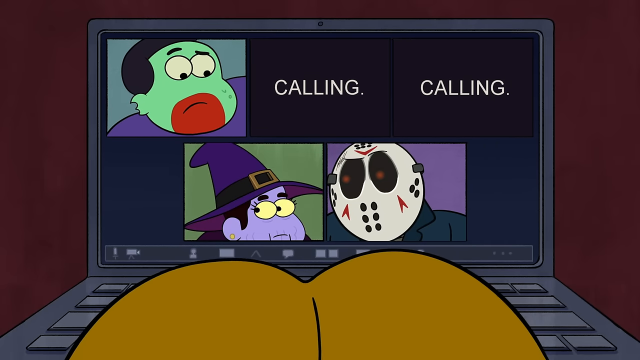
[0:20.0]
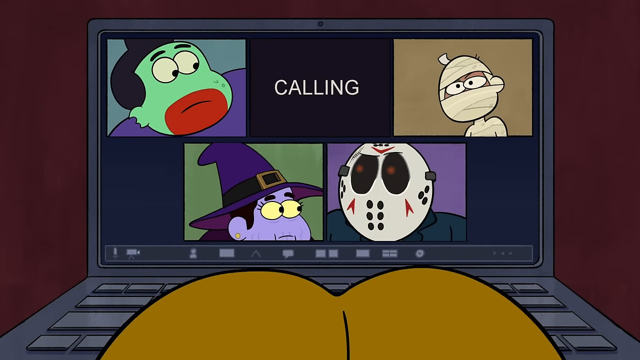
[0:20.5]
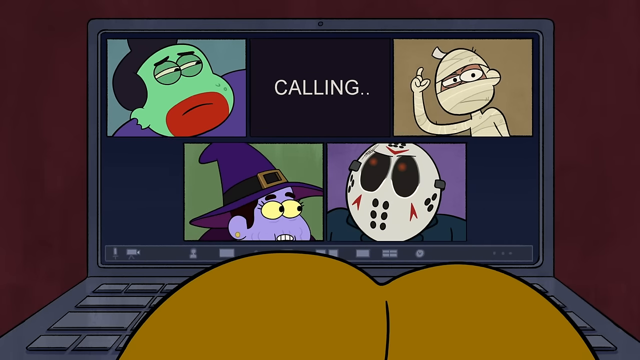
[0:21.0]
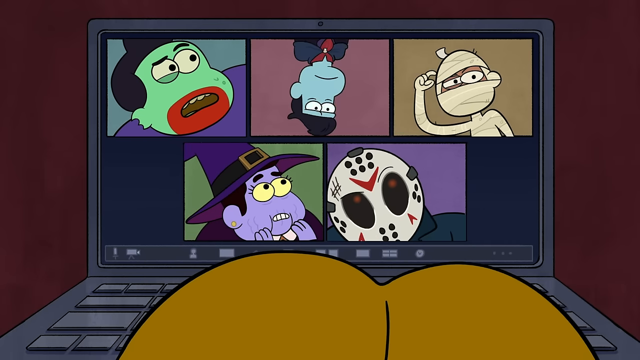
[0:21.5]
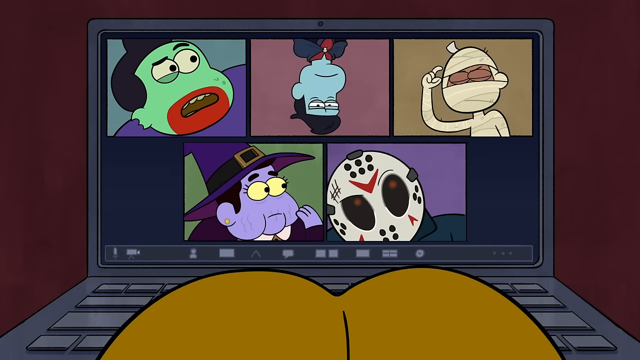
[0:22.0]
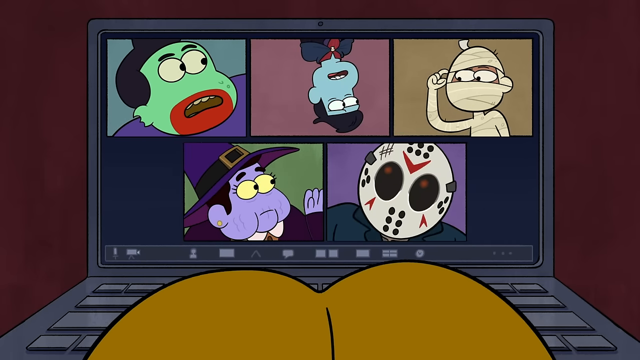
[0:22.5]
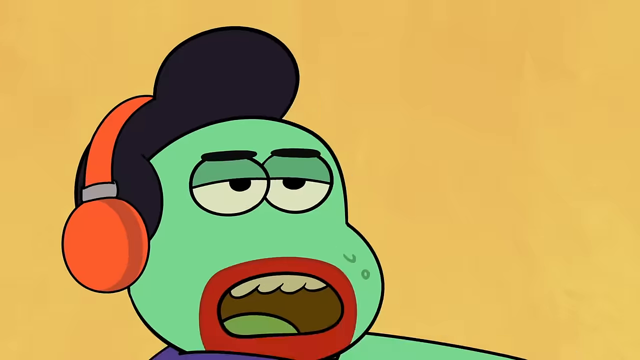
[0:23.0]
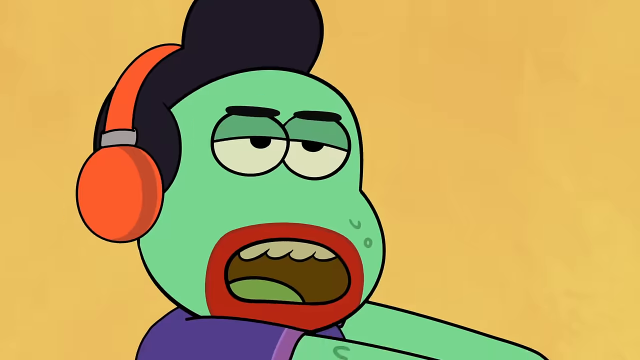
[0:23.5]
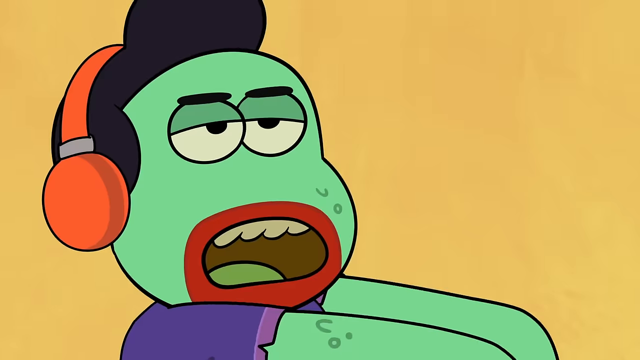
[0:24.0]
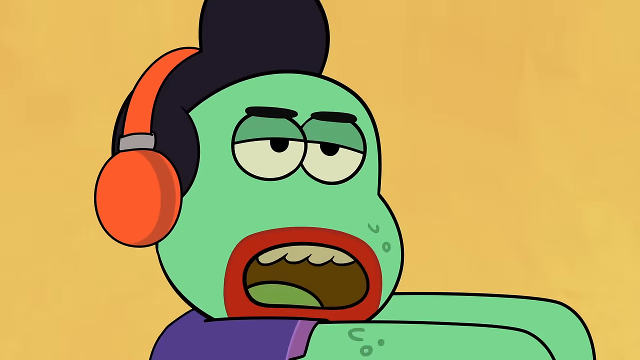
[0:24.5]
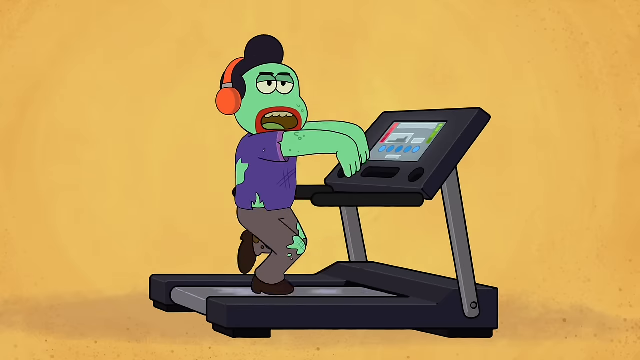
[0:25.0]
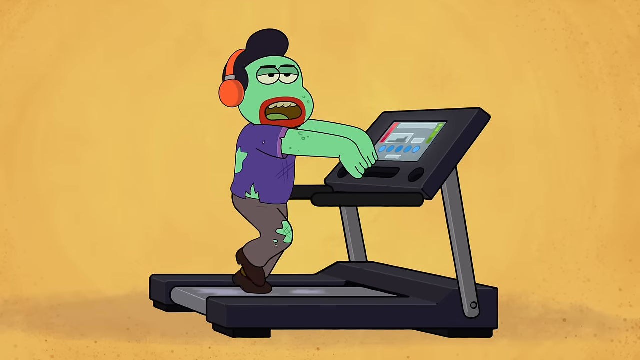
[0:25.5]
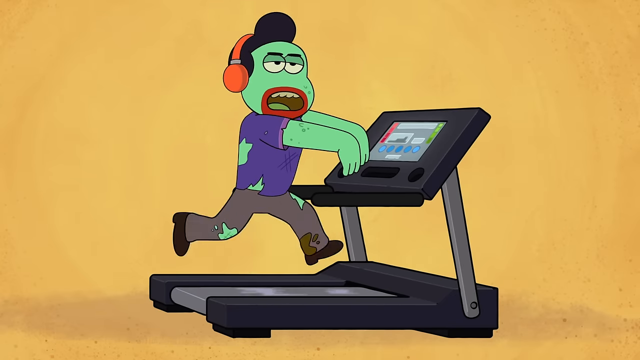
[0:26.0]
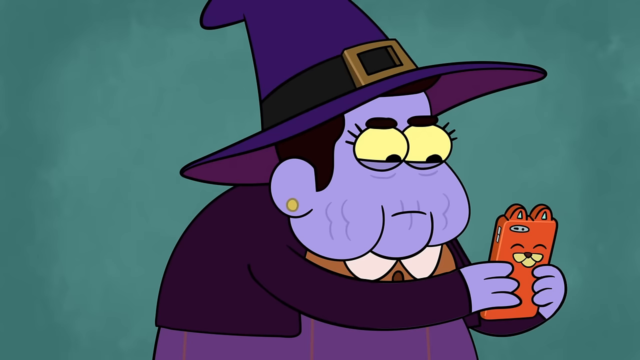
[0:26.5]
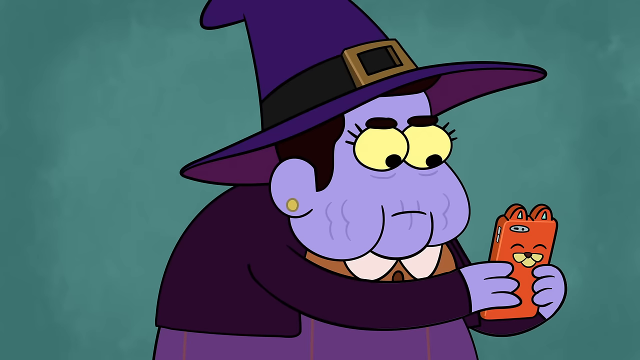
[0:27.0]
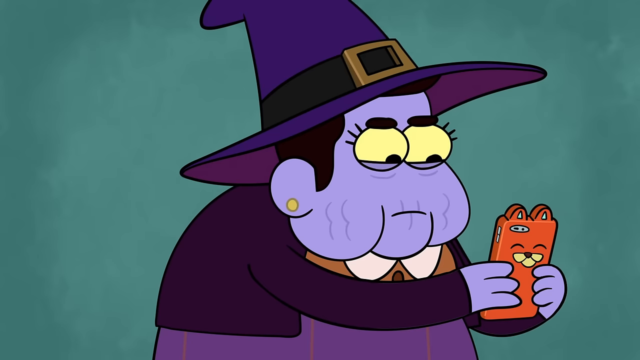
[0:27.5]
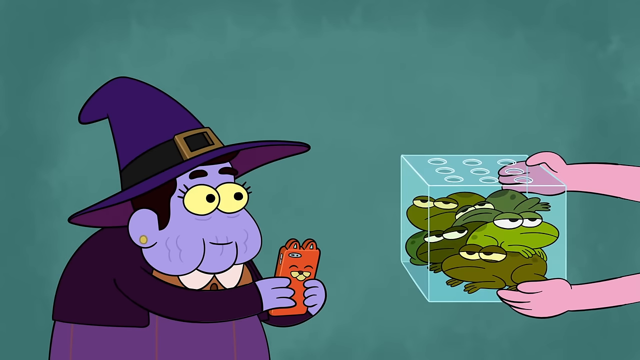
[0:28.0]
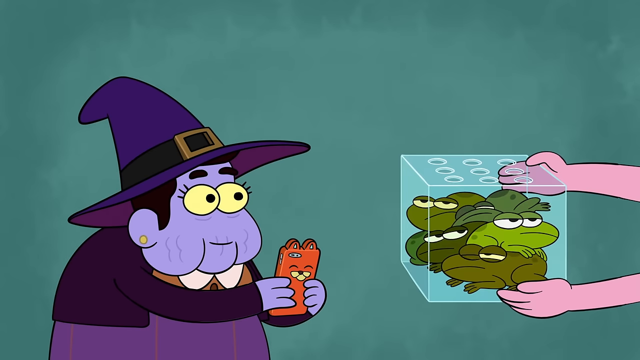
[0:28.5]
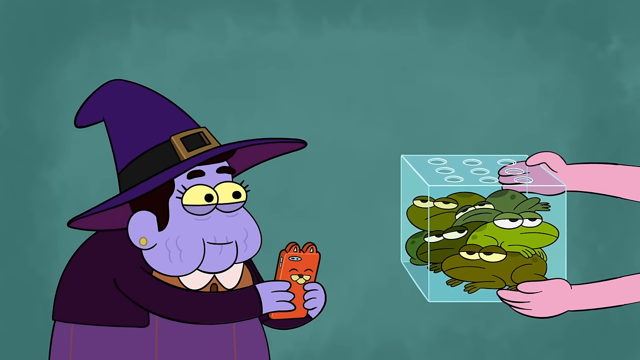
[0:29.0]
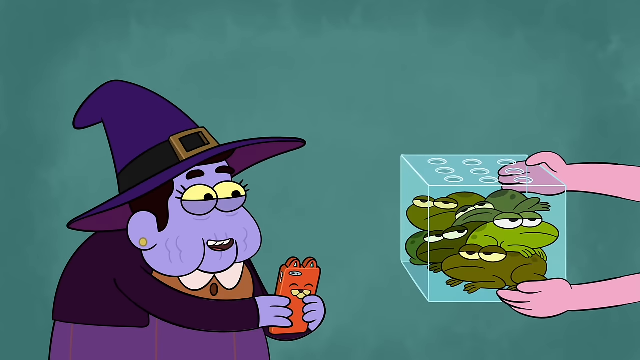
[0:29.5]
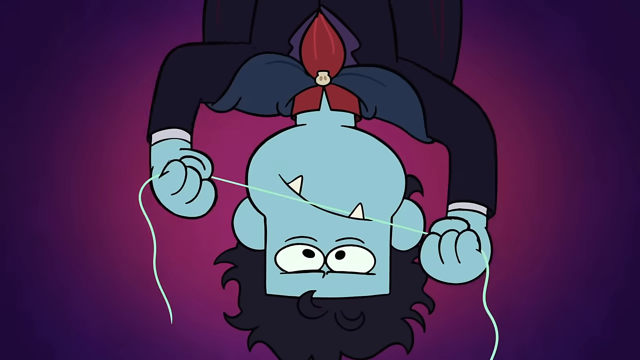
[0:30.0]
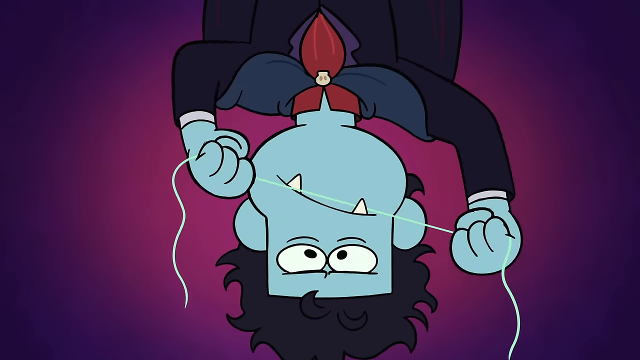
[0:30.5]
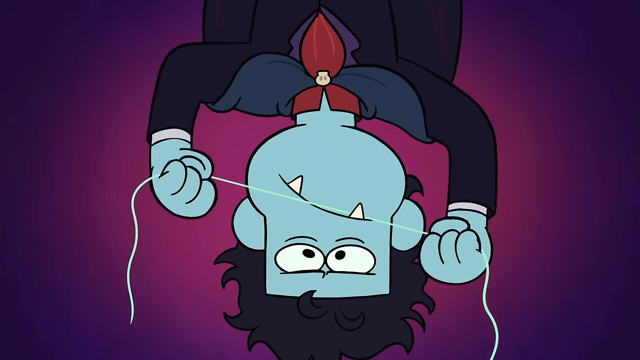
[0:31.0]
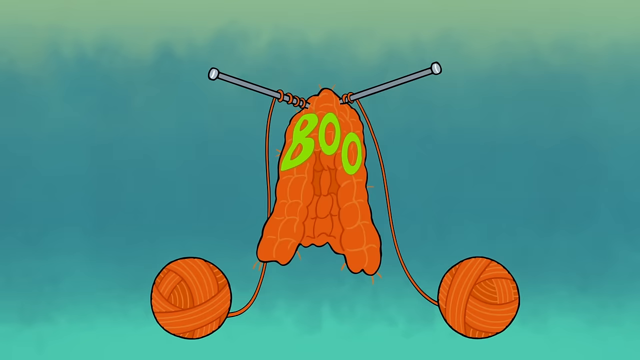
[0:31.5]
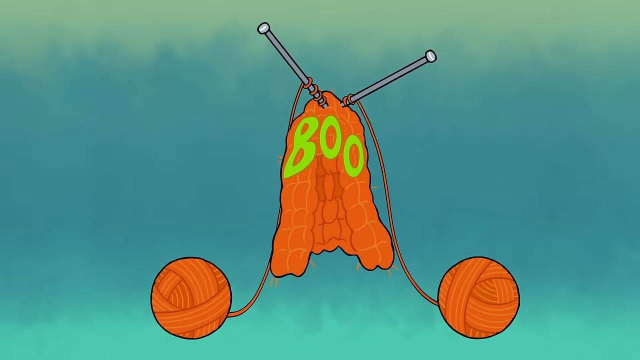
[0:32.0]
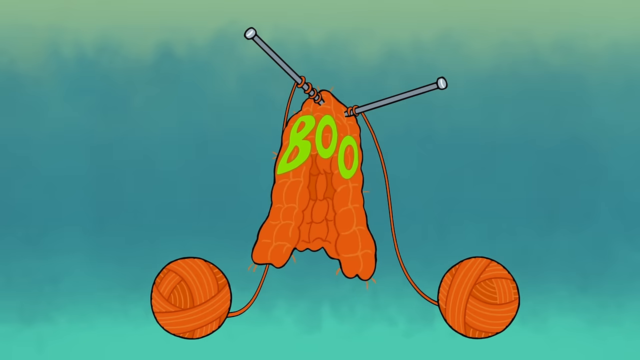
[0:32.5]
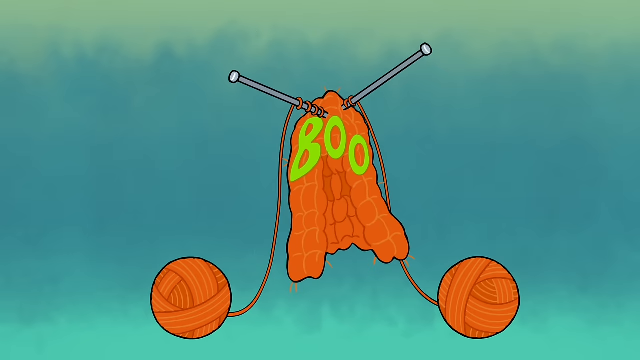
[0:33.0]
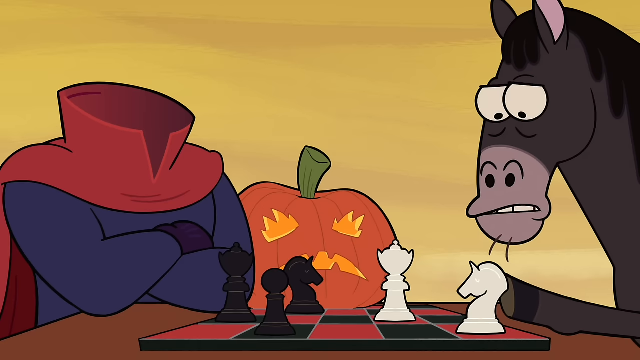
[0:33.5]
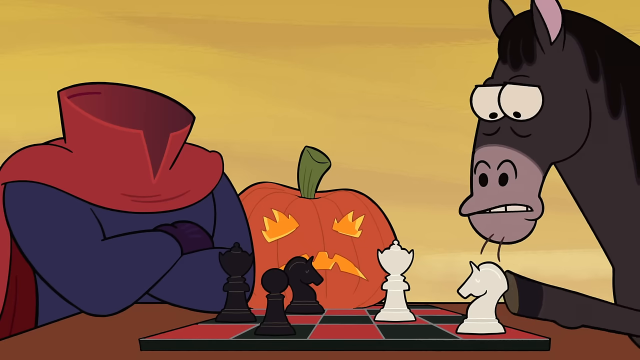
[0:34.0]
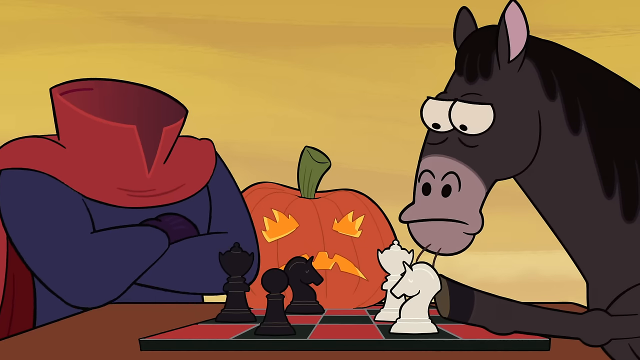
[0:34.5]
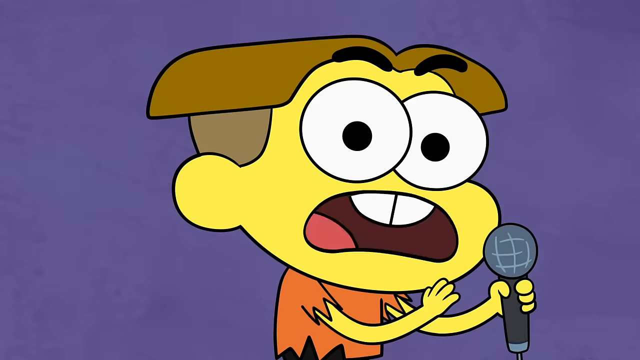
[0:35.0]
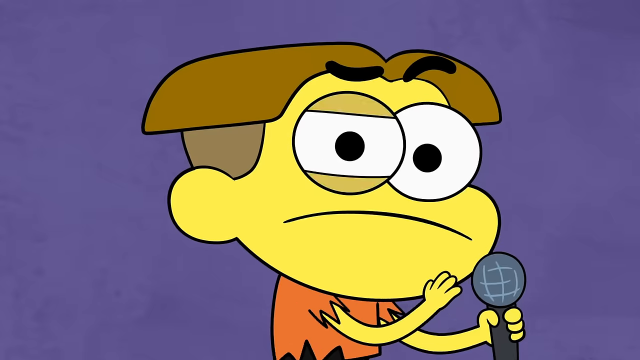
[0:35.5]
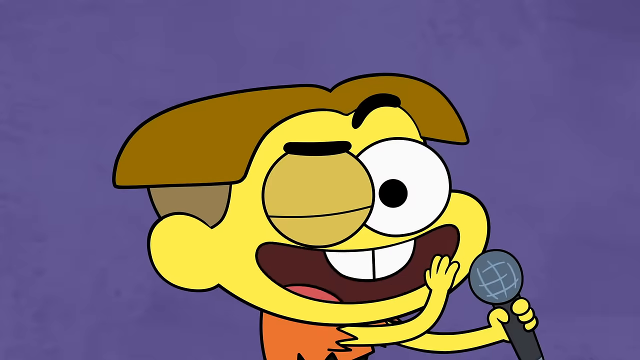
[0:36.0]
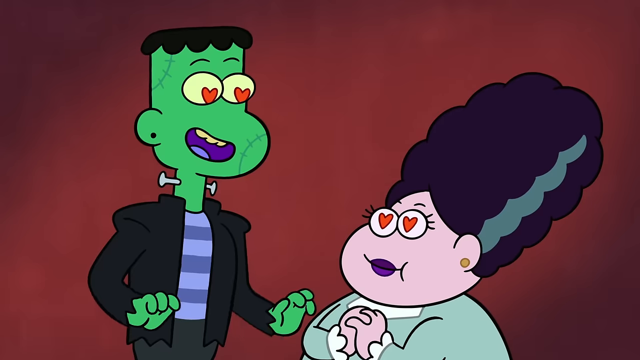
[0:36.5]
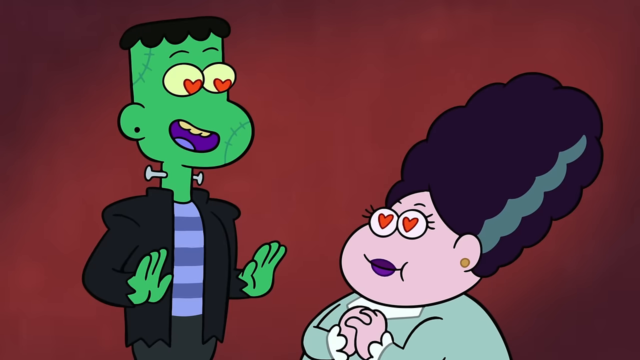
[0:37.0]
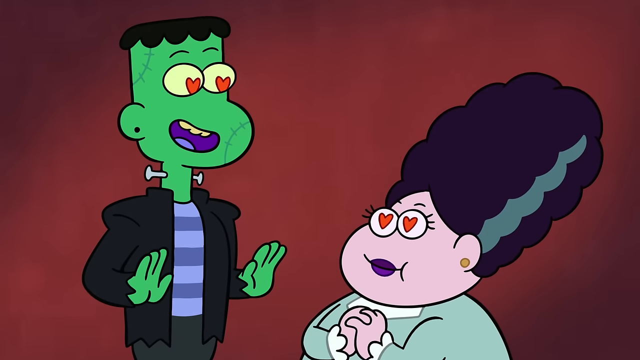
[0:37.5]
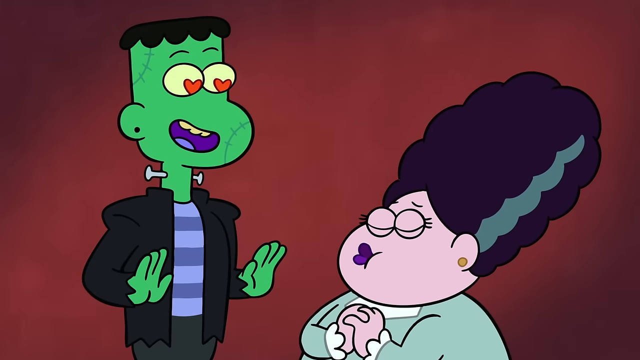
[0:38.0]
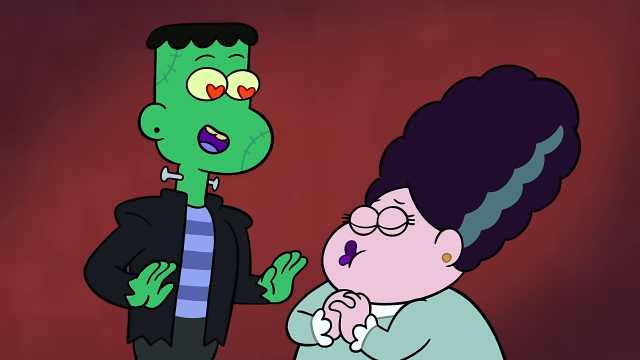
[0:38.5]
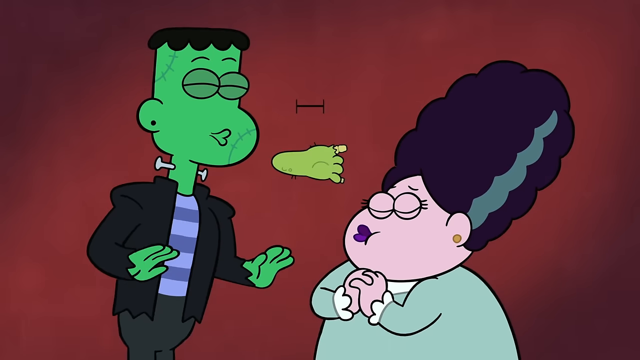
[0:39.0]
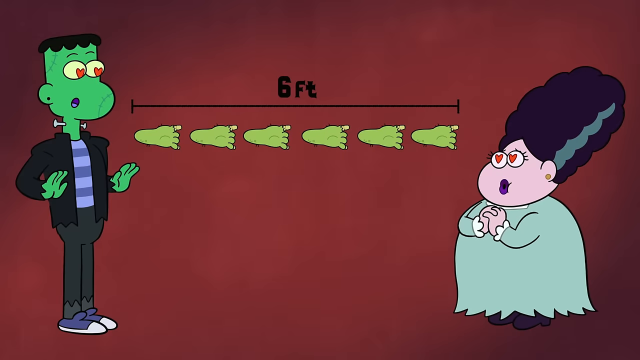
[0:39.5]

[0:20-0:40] The video chat with the other monsters starts. On the call there appear to be Freddy Krueger, a witch, and maybe another Frankenstein with a green face. The video call is on a laptop, seen from the perspective of the Frankenstein child. A mummy joins the call, and then a vampire. A zombie is on a treadmill, apparently taking the video call from there. The witch takes the call from her phone while buying some frogs at a pet store. The vampire hangs upside down, flossing his teeth. A headless man with a pumpkin plays chess with a horse. Another Frankenstein's monster looks like he is about to kiss some kind of witch. It is a cartoon TV show of some sort.